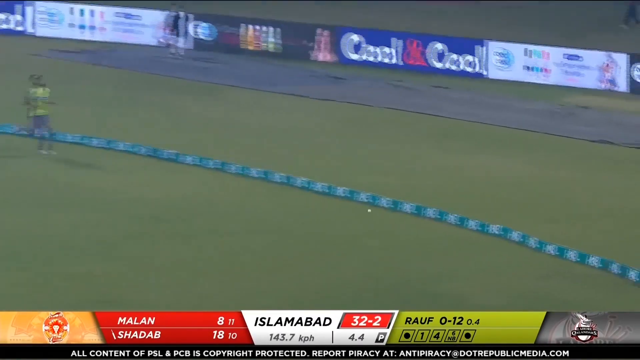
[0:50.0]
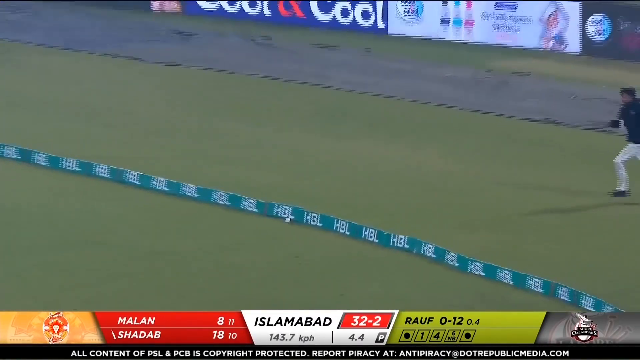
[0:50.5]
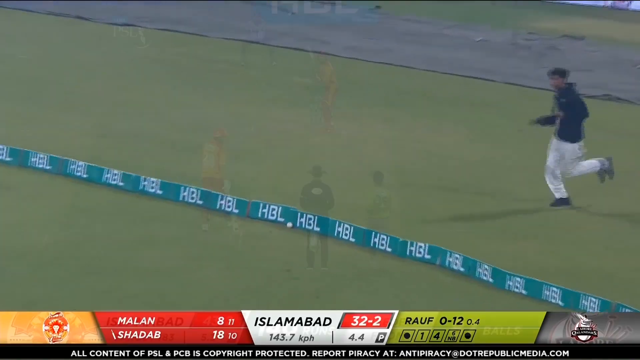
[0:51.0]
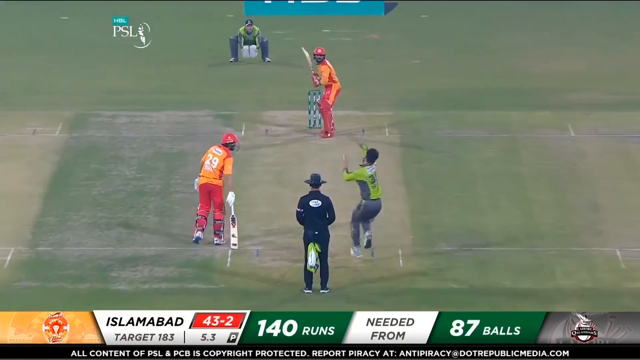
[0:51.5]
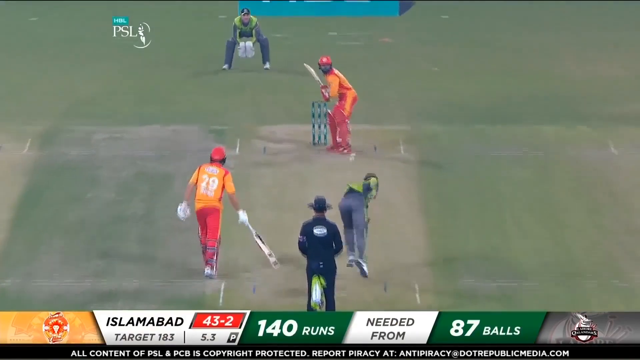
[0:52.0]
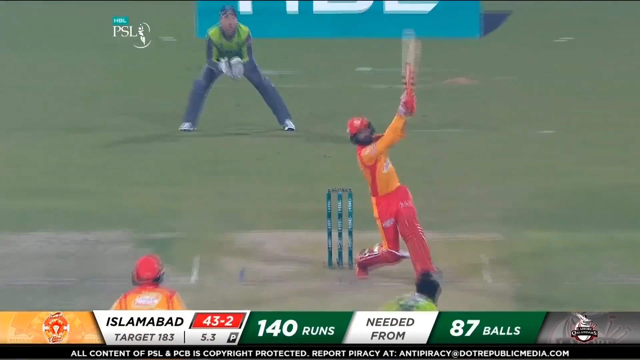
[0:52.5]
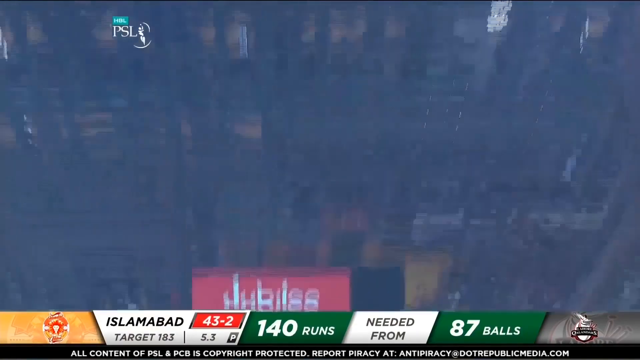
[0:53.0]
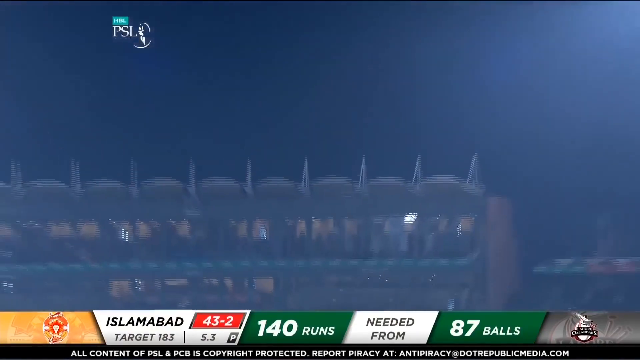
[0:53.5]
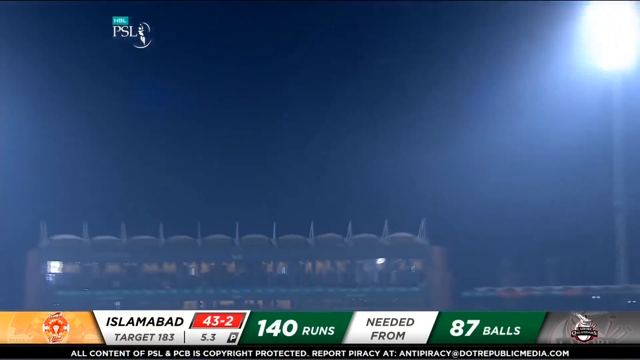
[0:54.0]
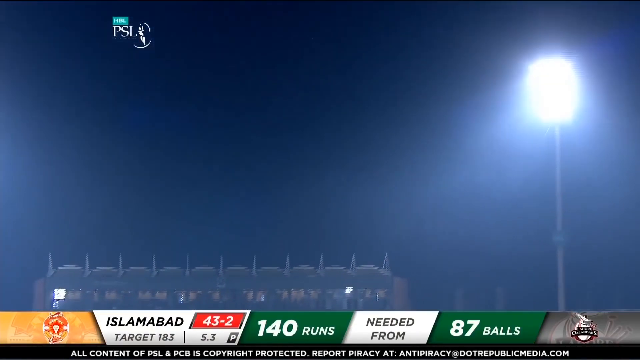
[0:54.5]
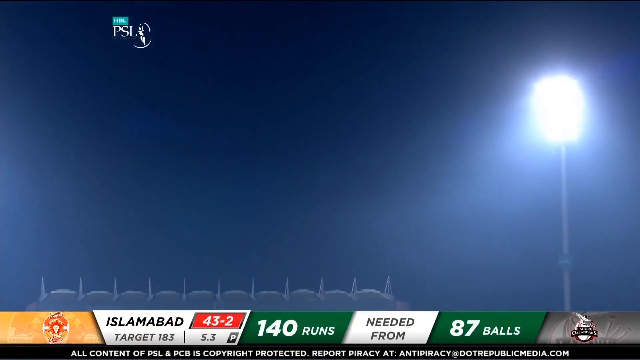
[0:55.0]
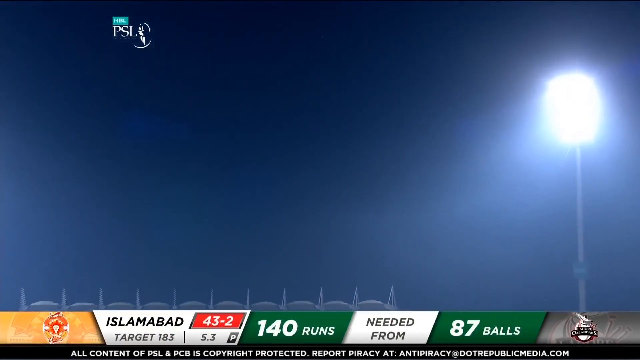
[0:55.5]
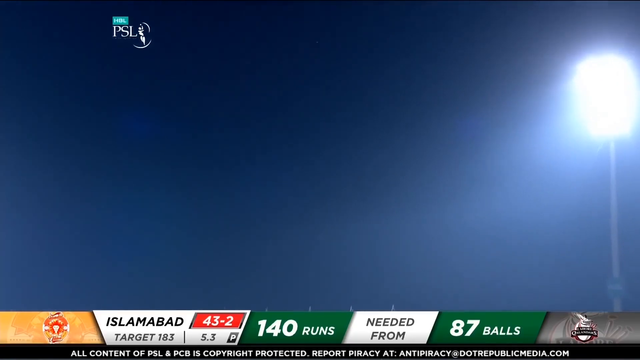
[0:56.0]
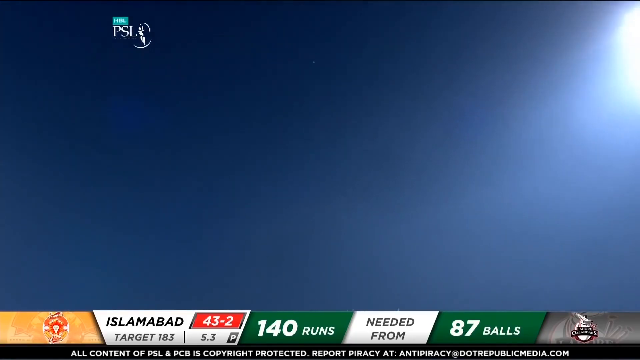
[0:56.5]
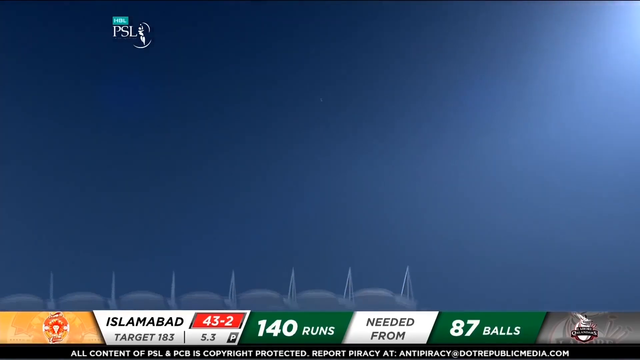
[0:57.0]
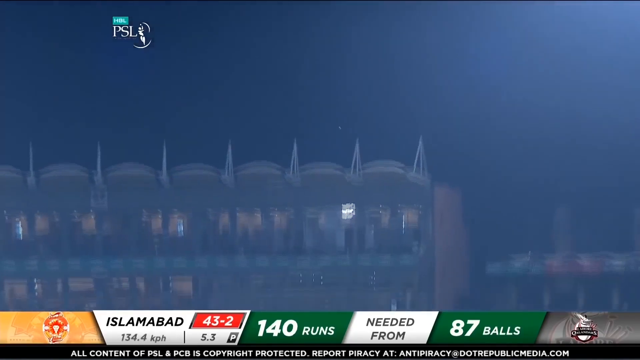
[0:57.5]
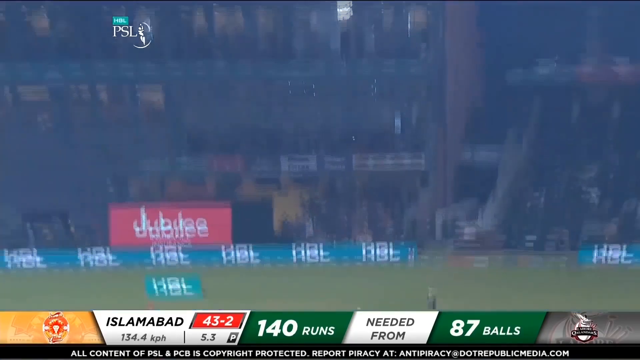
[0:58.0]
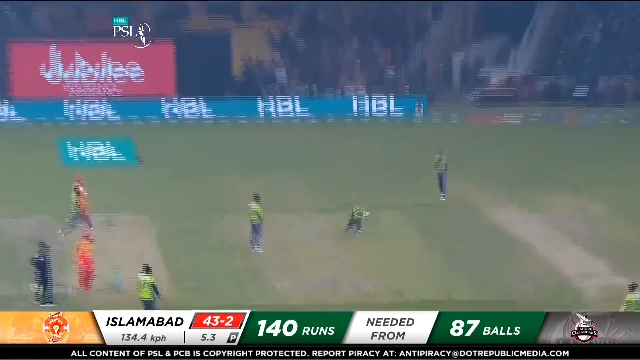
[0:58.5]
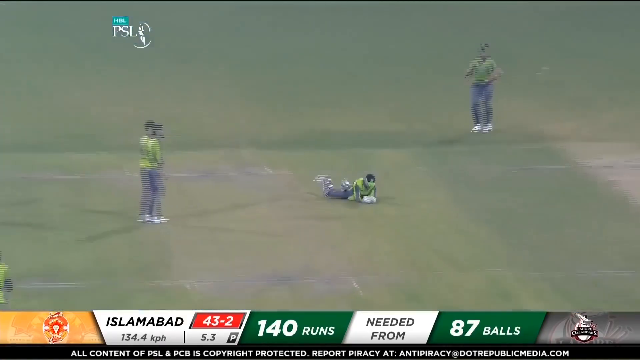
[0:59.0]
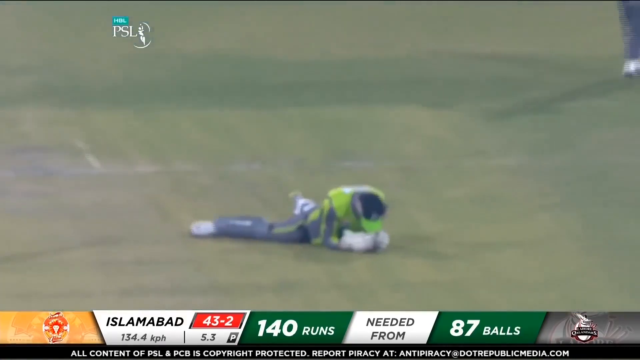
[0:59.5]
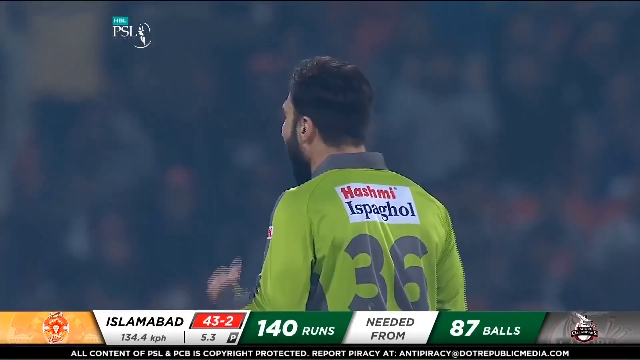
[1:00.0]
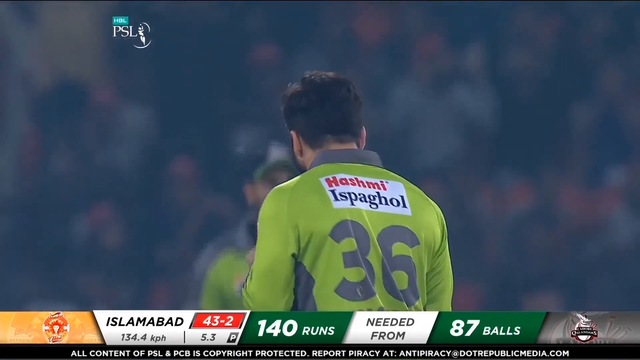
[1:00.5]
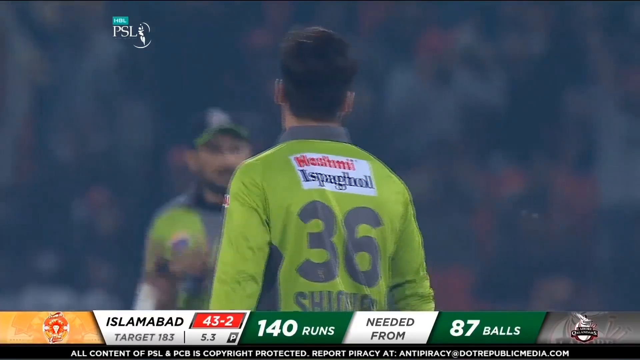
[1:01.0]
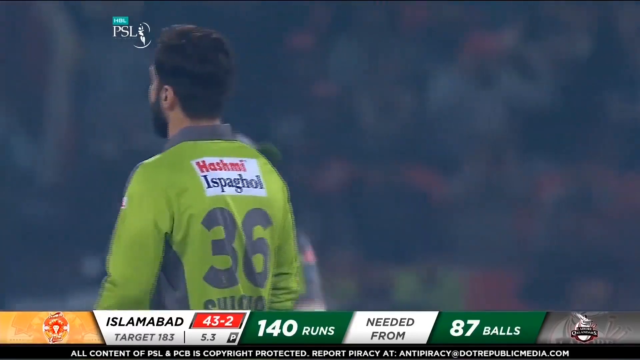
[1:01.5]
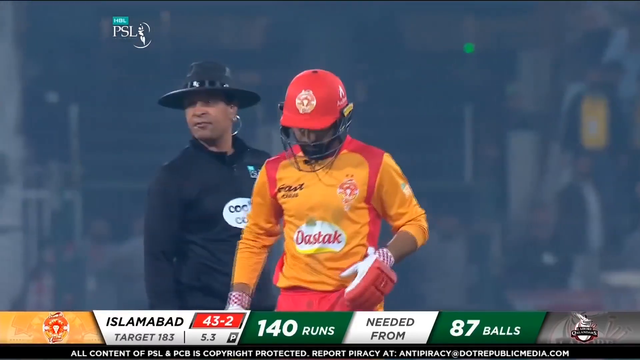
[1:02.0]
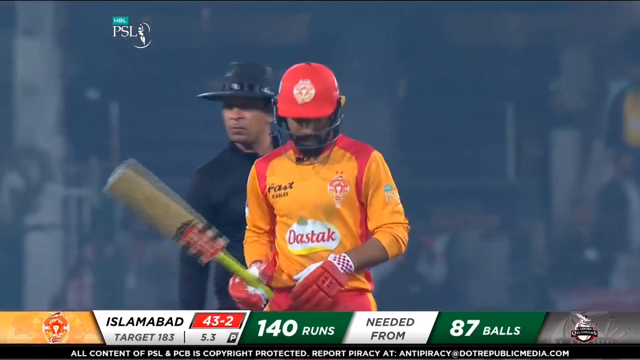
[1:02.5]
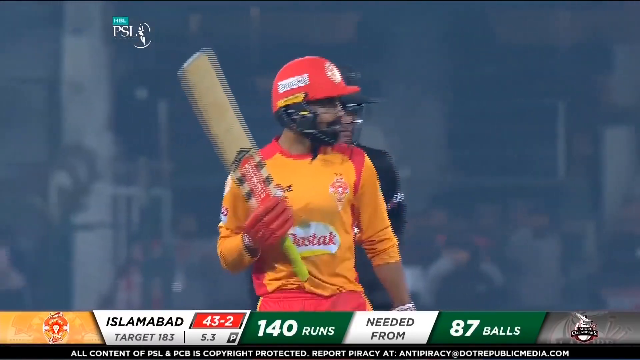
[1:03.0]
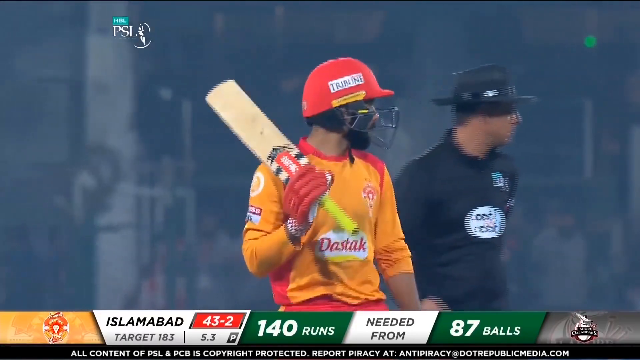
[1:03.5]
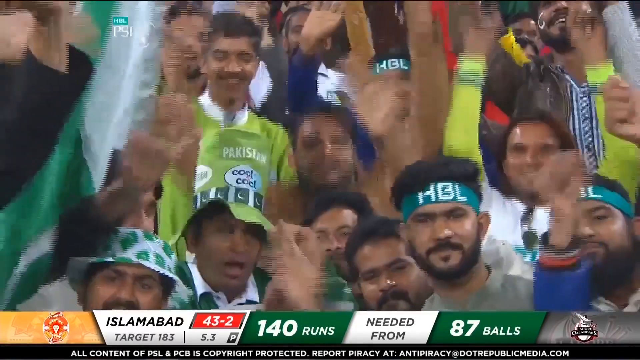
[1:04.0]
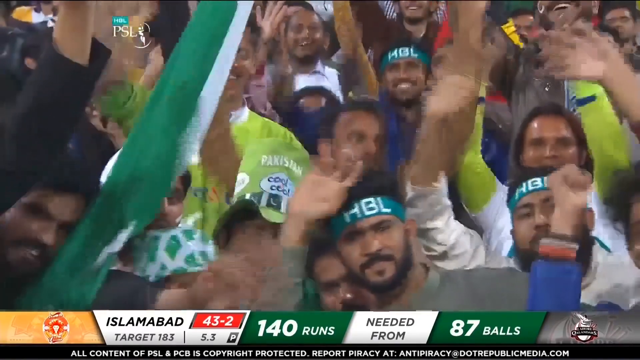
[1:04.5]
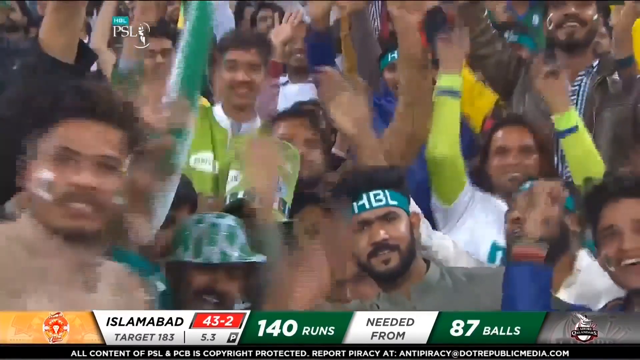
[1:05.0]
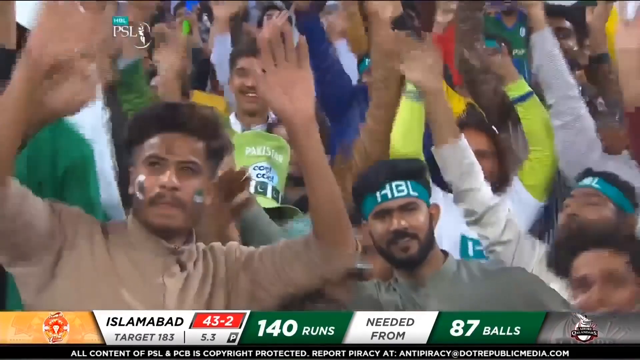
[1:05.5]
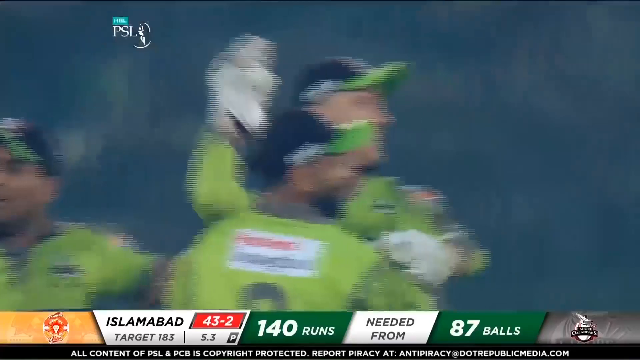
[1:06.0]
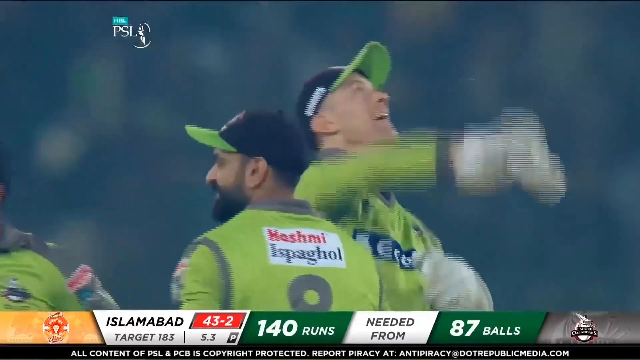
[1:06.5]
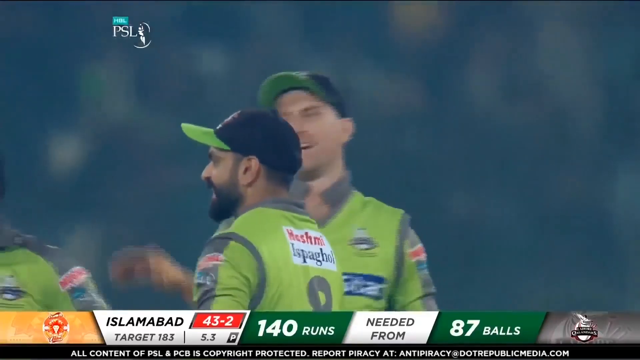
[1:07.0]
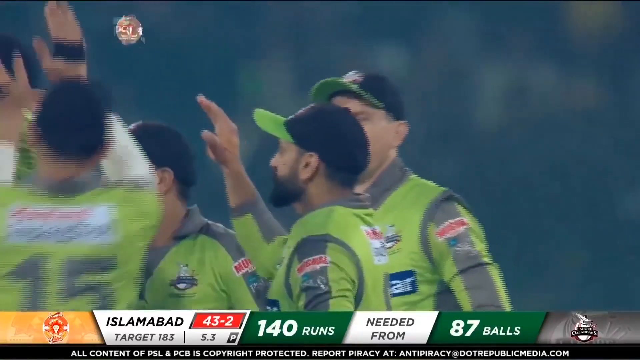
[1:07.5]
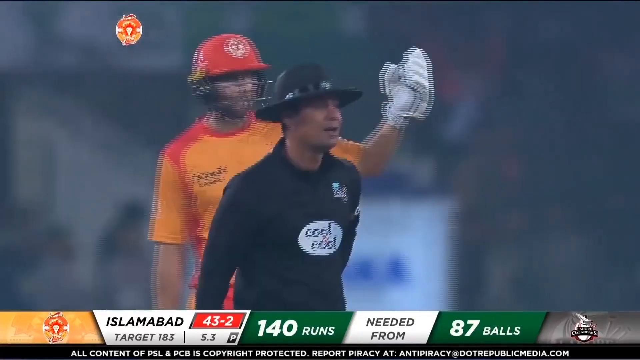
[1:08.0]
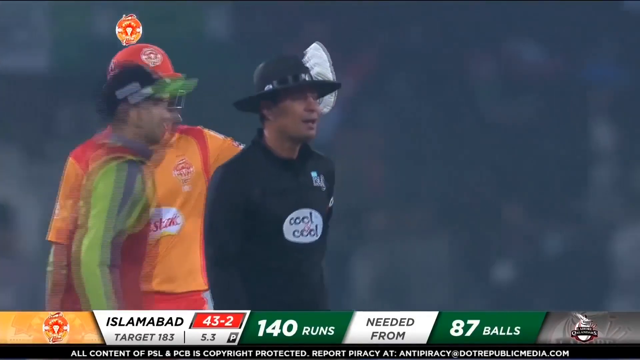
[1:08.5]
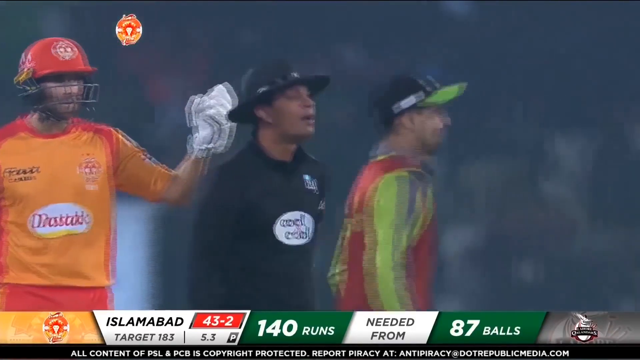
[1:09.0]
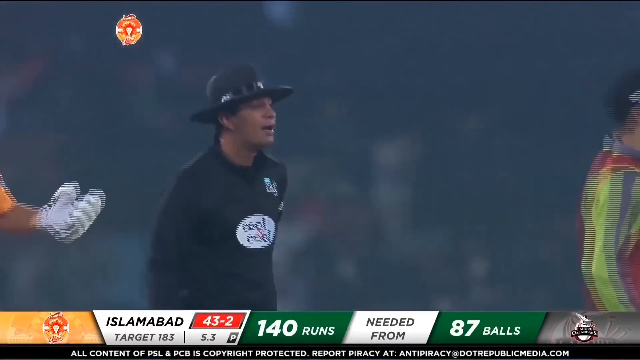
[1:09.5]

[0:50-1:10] In another delivery, the bowler comes in from the right-hand side of the umpire and bowls neatly. The batsman gets completely underneath it and skies the ball very high into the night sky, though it does not travel far. The wicket-keeper, wearing gloves, comes running to catch it, and the batsman is caught out. This is a night game under floodlights. The score becomes 43-3, with Islamabad needing 140 runs from 87 balls. Green-shirted fans celebrate.